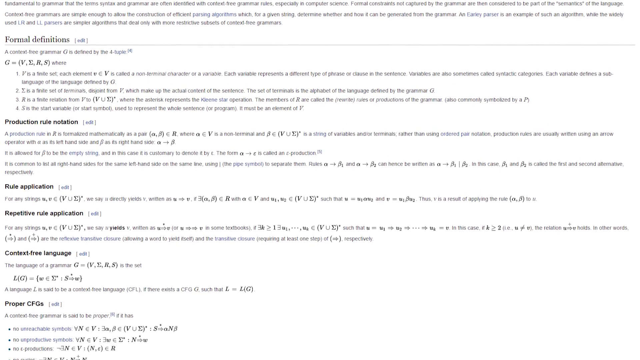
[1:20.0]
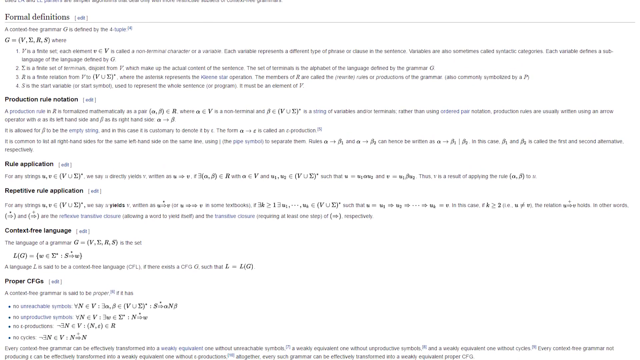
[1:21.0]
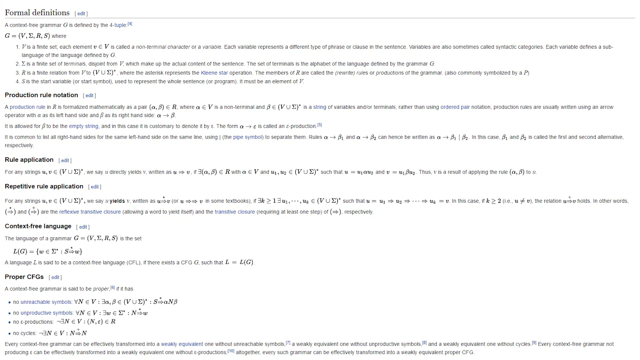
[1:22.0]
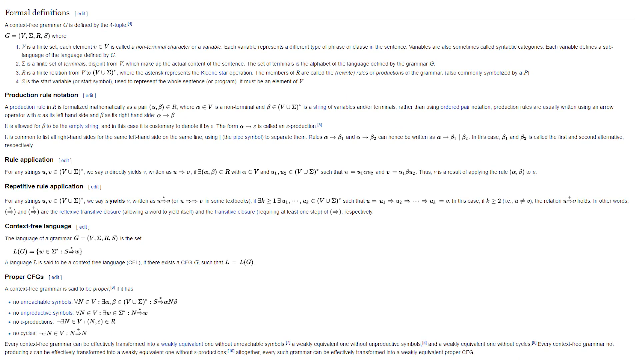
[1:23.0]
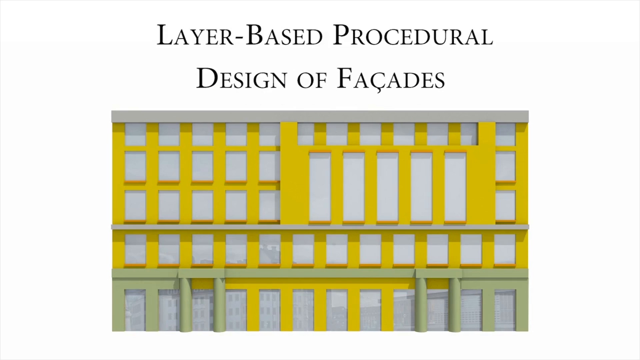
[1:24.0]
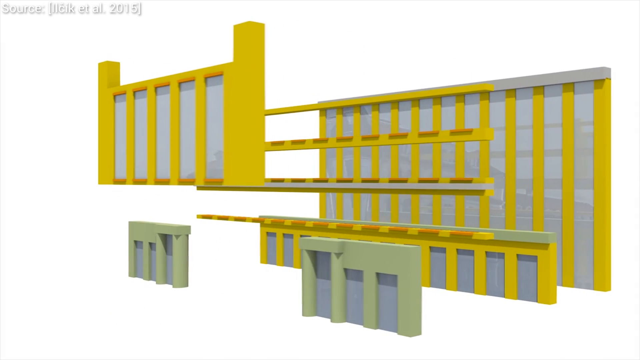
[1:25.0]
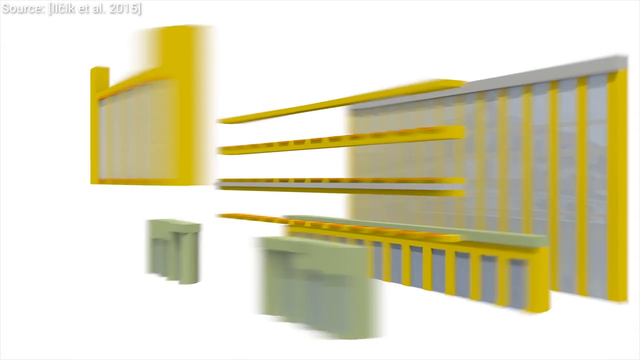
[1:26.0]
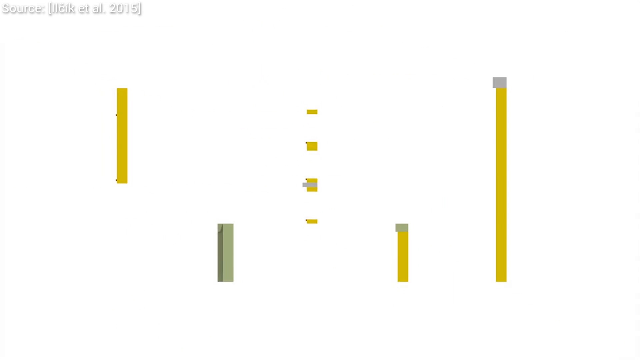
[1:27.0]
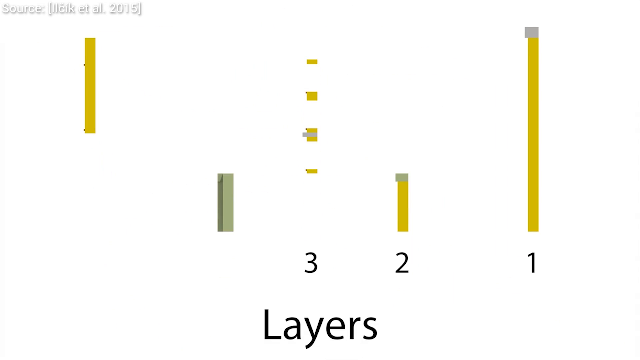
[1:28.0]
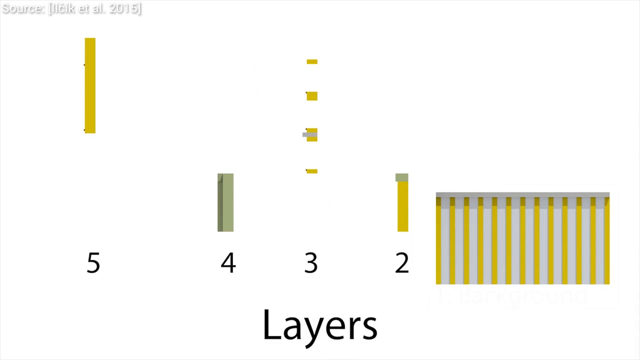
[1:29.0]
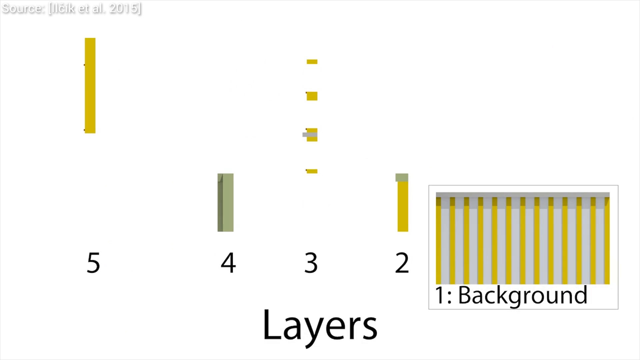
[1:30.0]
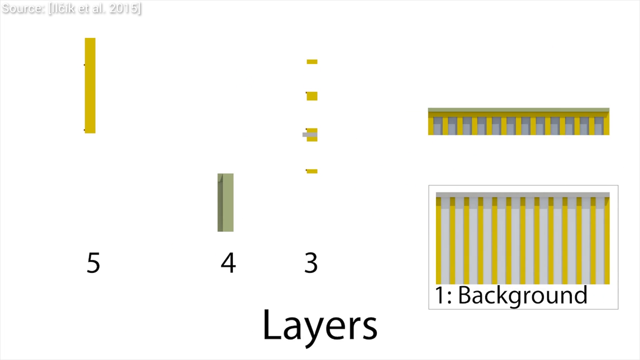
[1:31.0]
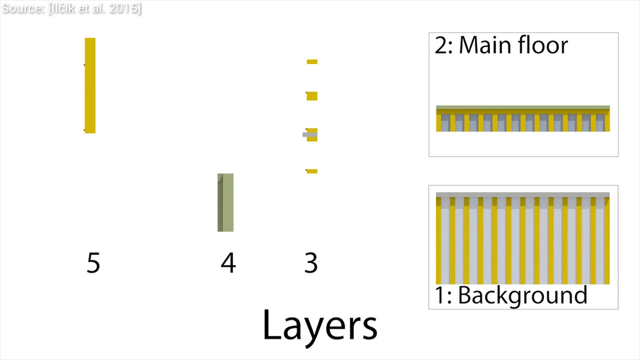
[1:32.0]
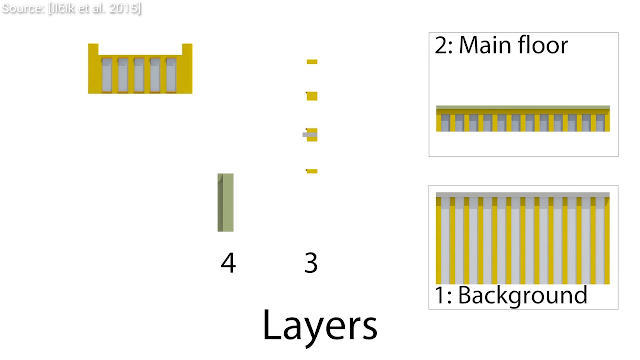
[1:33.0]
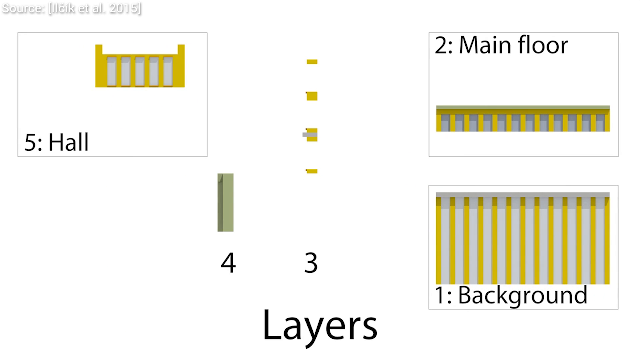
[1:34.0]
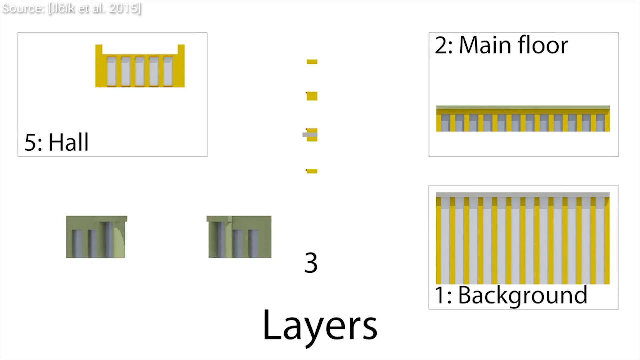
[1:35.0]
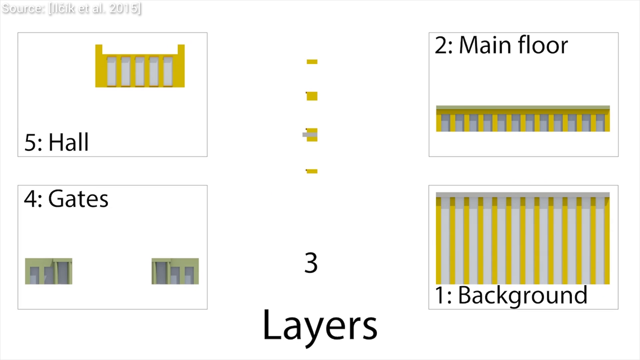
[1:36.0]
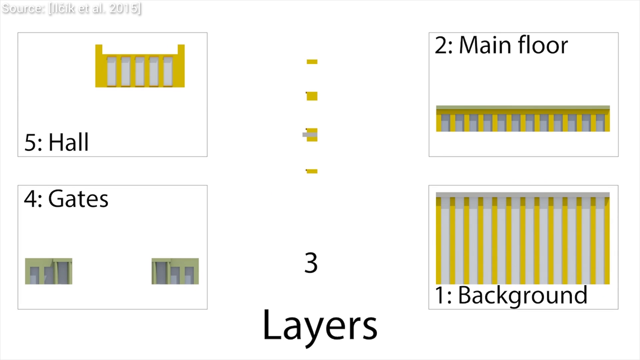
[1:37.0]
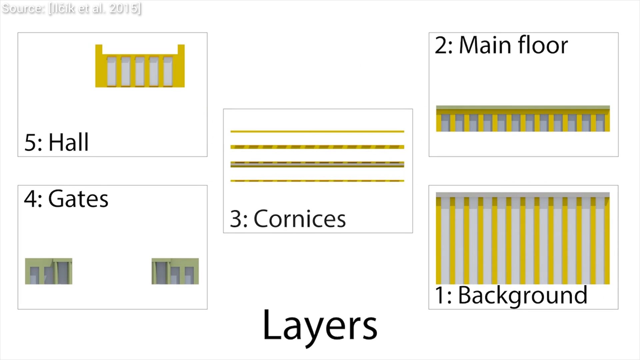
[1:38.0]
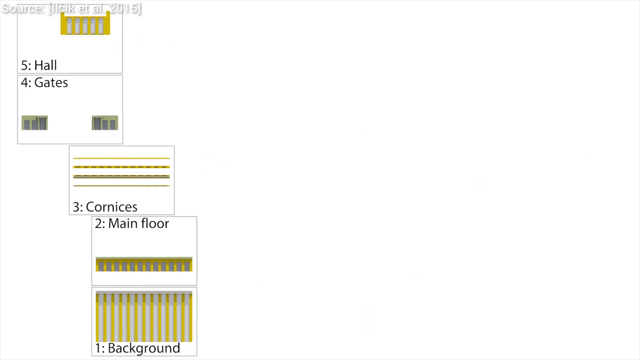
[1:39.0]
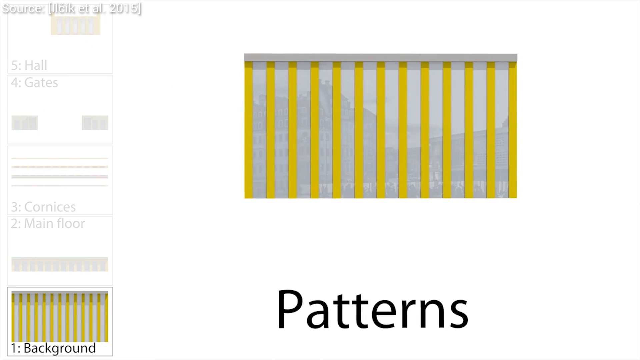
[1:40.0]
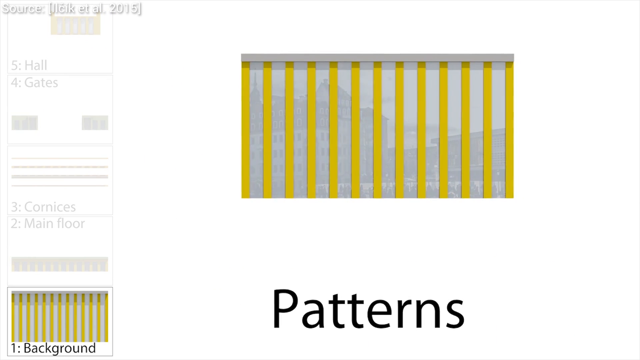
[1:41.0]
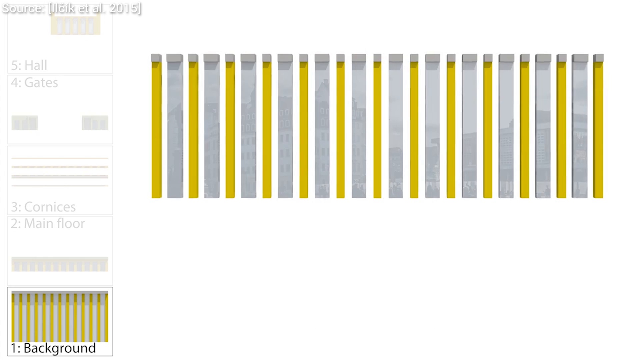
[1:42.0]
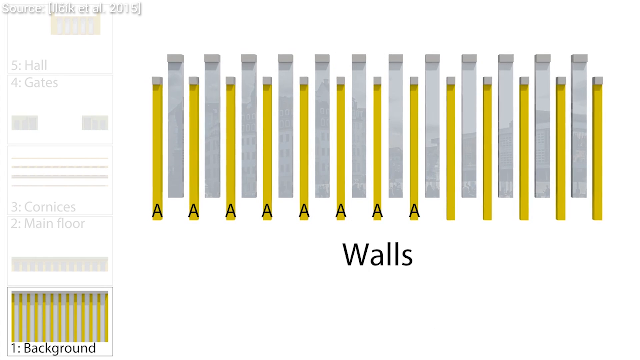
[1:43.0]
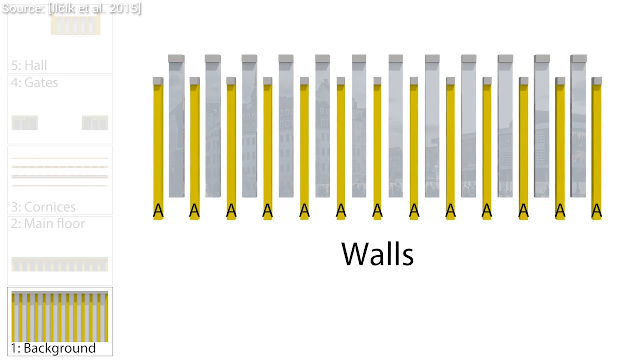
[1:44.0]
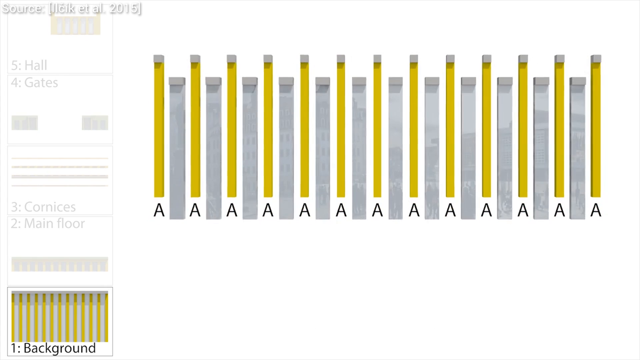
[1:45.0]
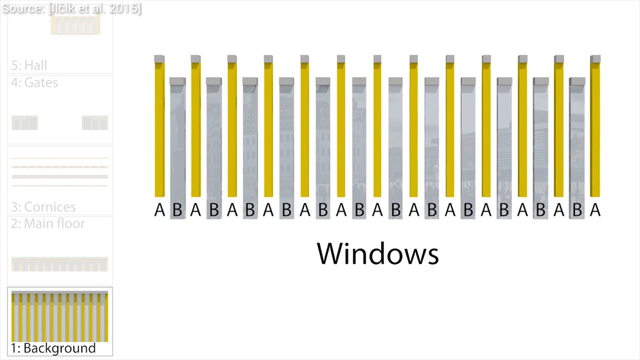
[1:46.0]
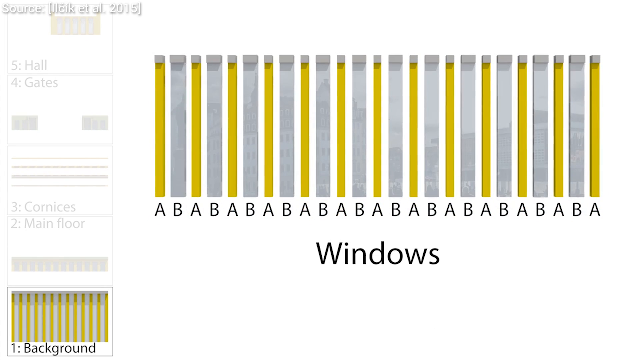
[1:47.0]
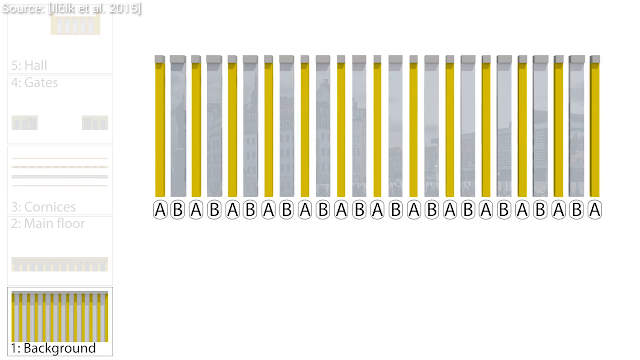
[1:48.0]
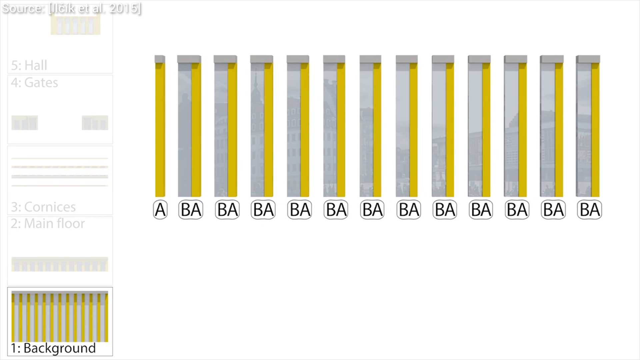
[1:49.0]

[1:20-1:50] The user continues to scroll slowly down the wiki page. The scene then changes to a title at the top reading "Layer-Based Procedural Design of Facades," with some sort of side view of a building underneath. The building changes, and what looks like a 3D version of the parts of a building appears; the building is yellow and gray. A side view follows, with four sections labeled one through four and the word "layers" at the bottom in the middle. On the right, the pictures are labeled: number one is "the background," number two "the main floor," number five "the hall," number four "the gates," and number three "the cornices." All these parts shift to the left side. A part appears in the middle with "patterns" at the bottom: patterns of a wall, with gray and yellow stripes labeled A, B, A, B, the yellow stripes labeled A and the gray stripes labeled B.